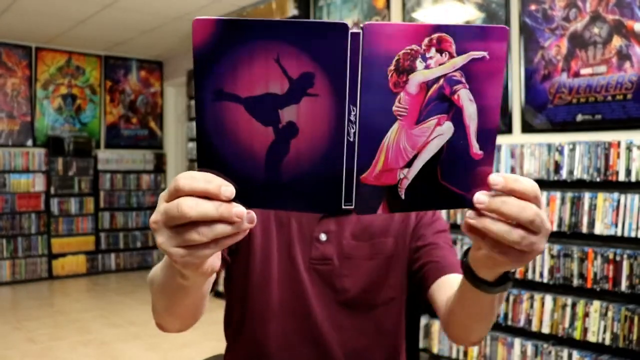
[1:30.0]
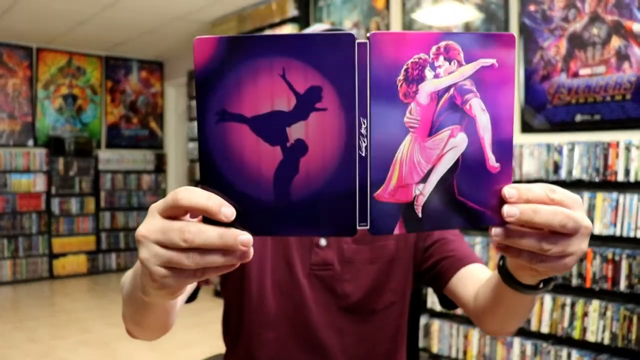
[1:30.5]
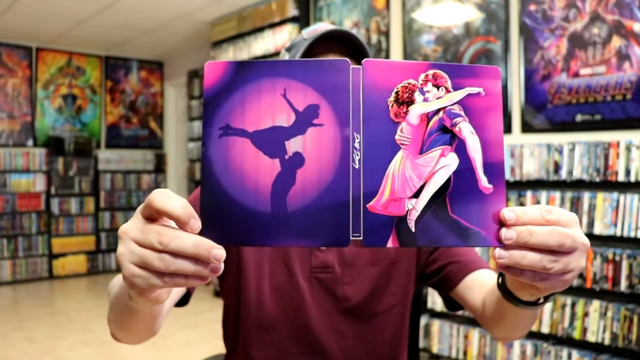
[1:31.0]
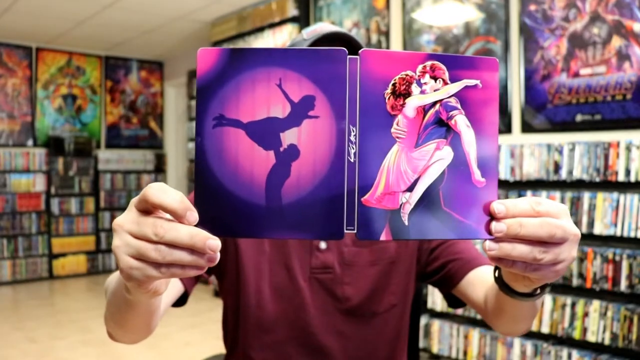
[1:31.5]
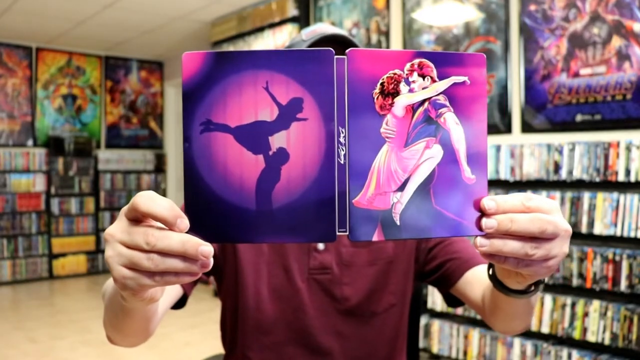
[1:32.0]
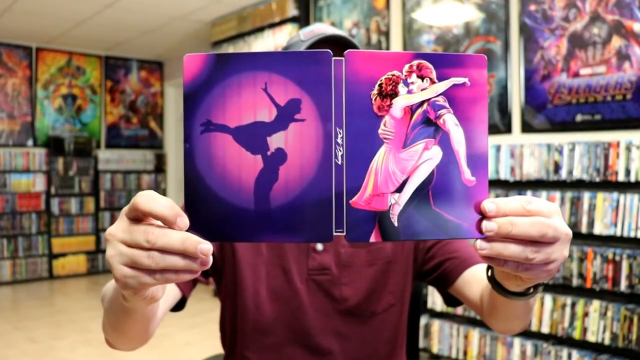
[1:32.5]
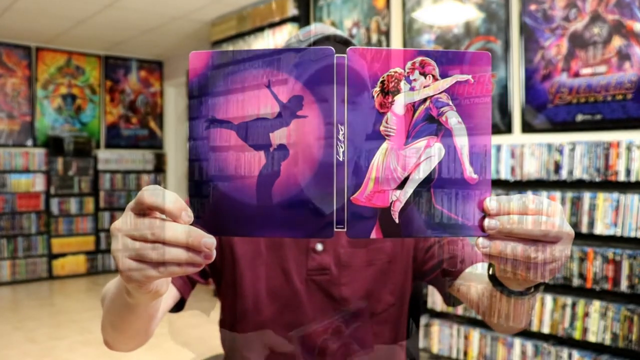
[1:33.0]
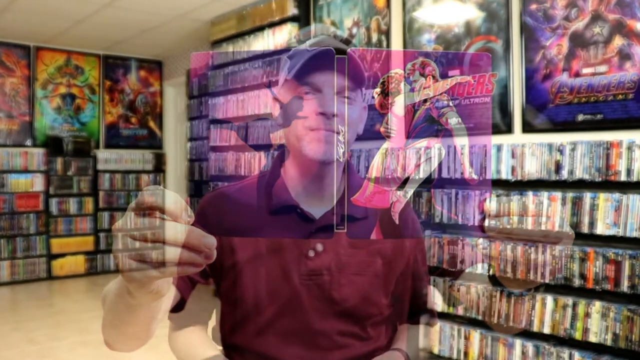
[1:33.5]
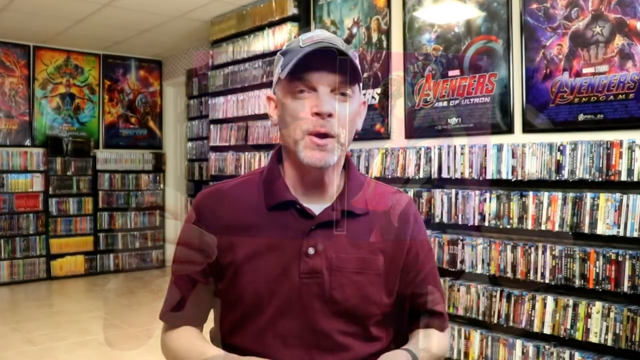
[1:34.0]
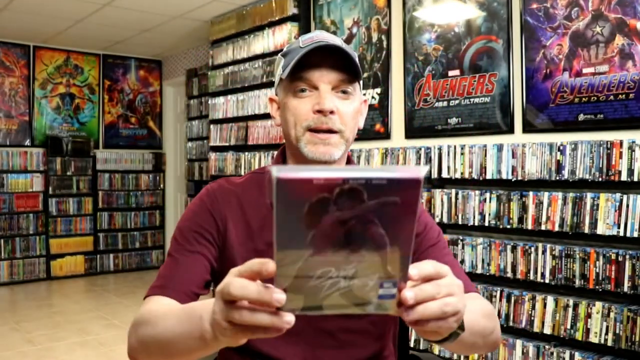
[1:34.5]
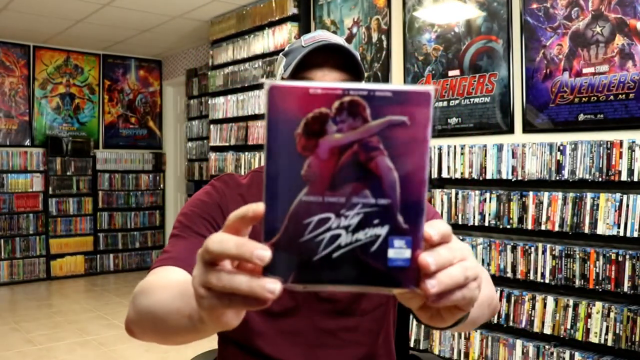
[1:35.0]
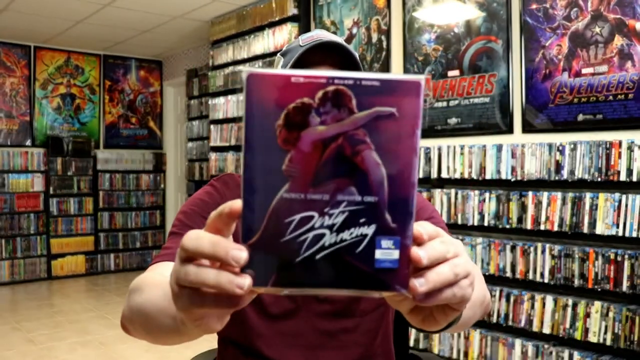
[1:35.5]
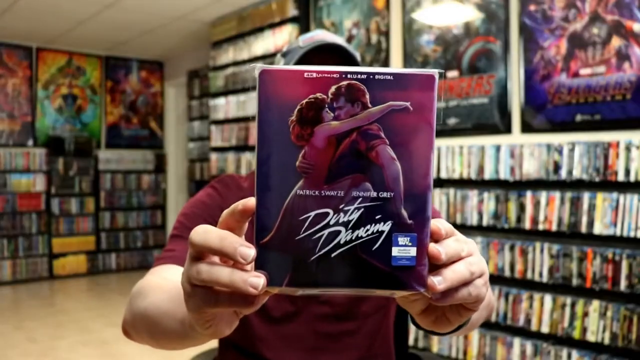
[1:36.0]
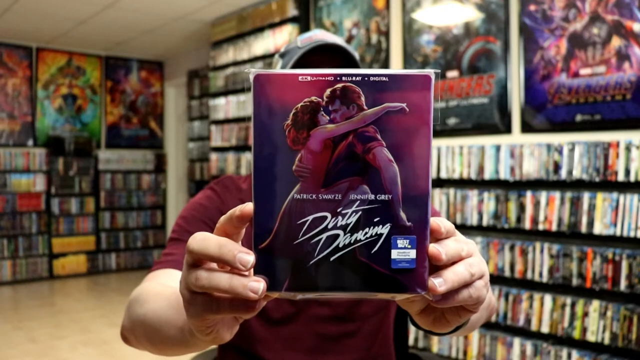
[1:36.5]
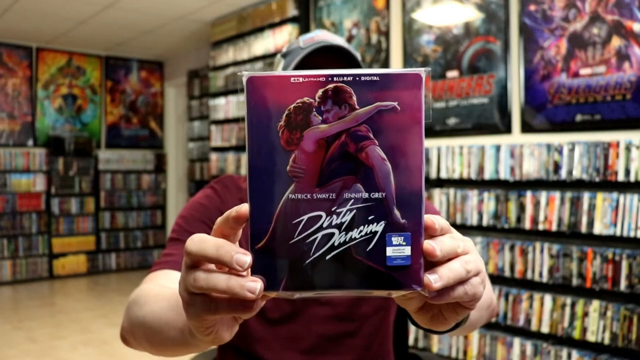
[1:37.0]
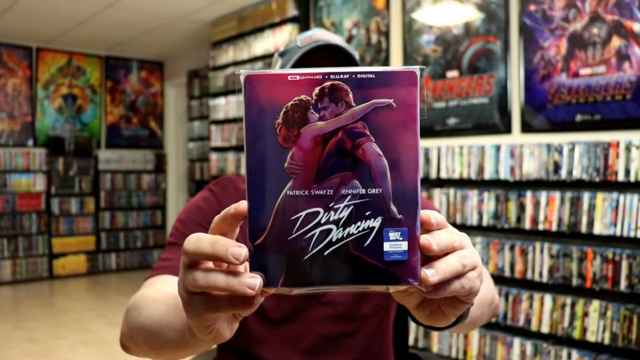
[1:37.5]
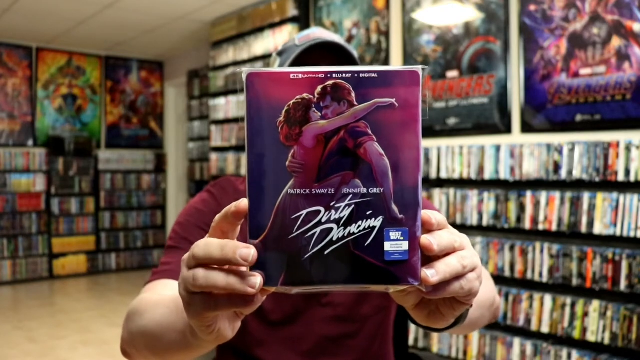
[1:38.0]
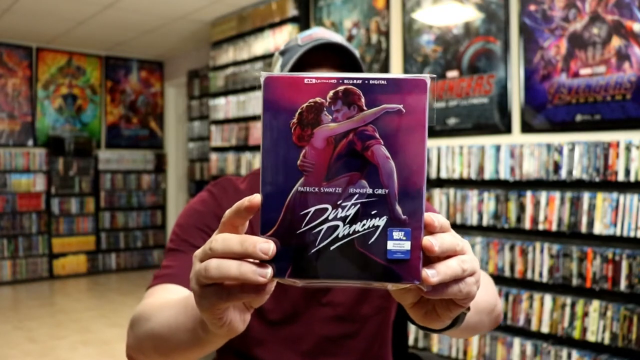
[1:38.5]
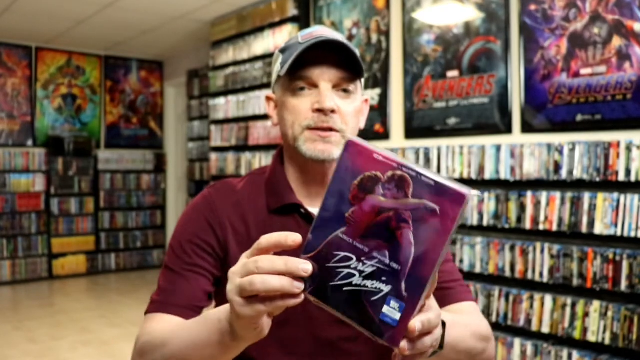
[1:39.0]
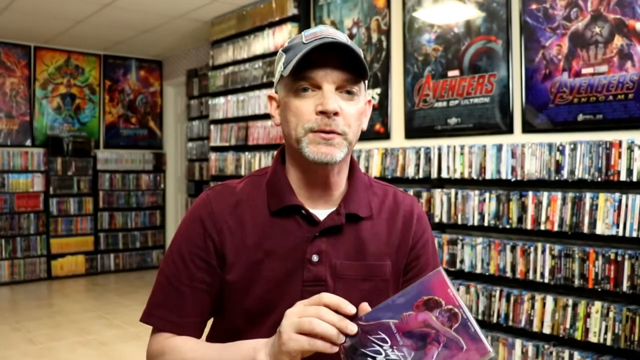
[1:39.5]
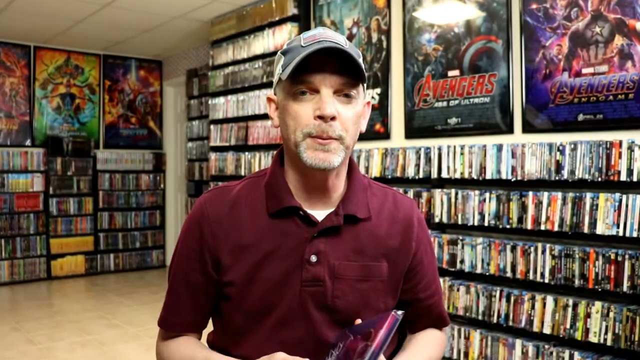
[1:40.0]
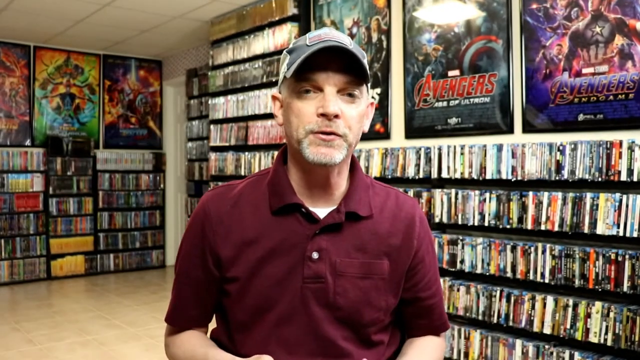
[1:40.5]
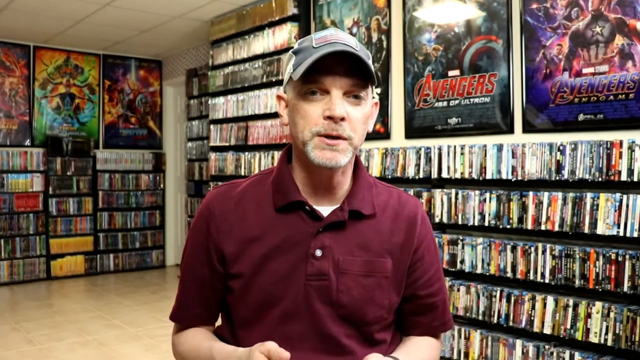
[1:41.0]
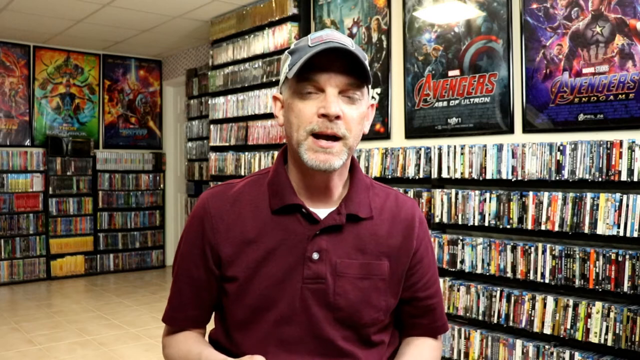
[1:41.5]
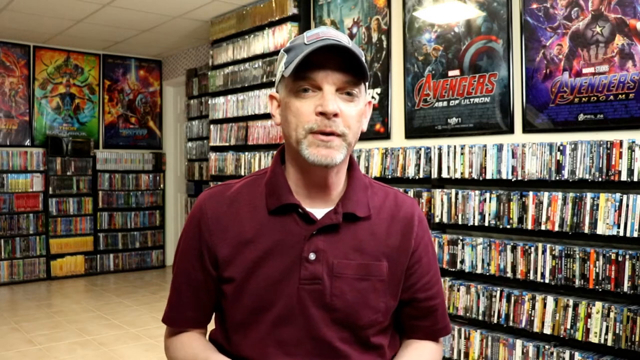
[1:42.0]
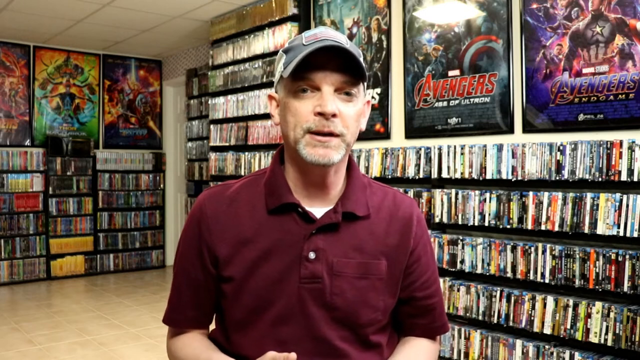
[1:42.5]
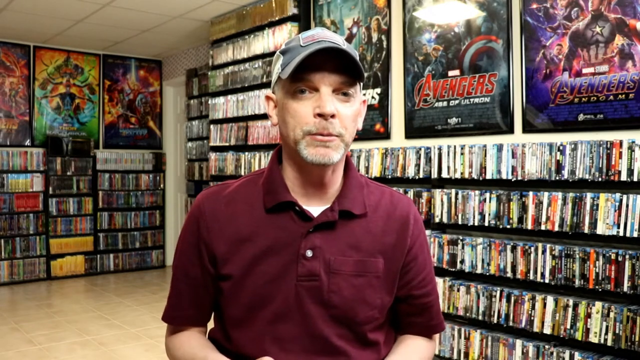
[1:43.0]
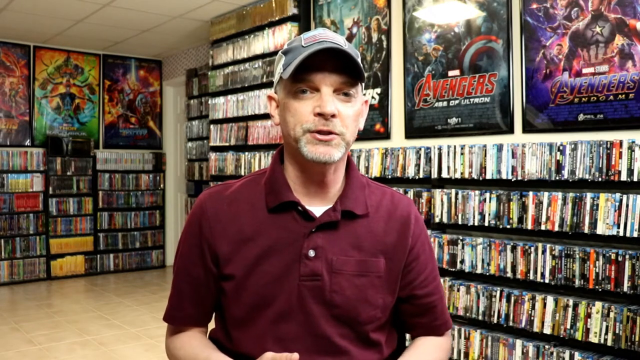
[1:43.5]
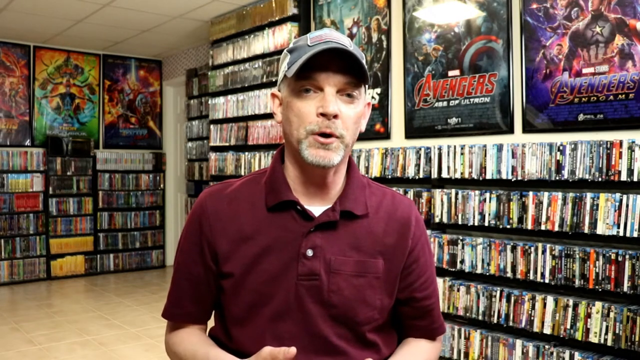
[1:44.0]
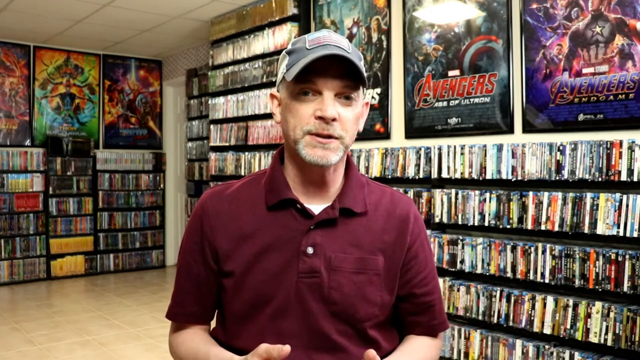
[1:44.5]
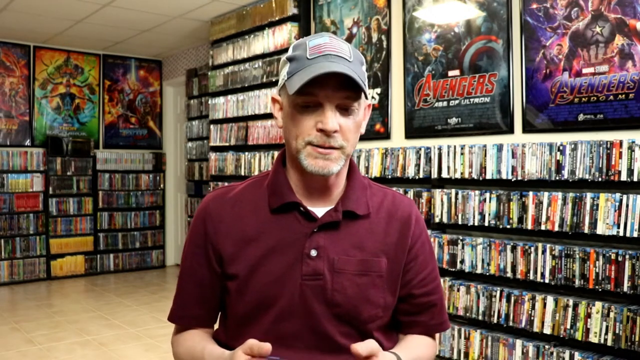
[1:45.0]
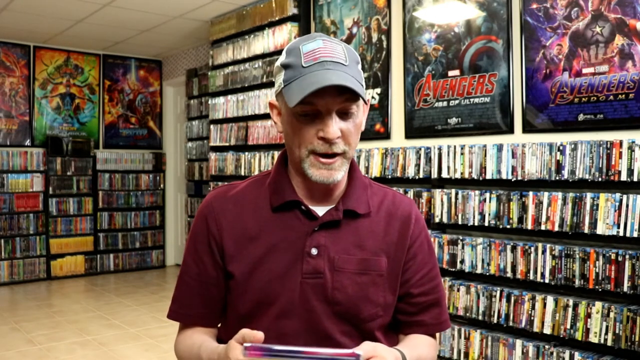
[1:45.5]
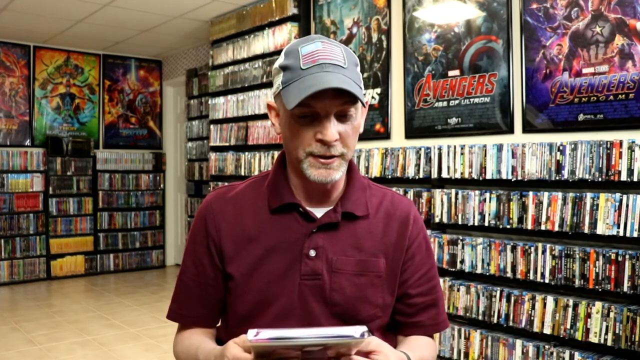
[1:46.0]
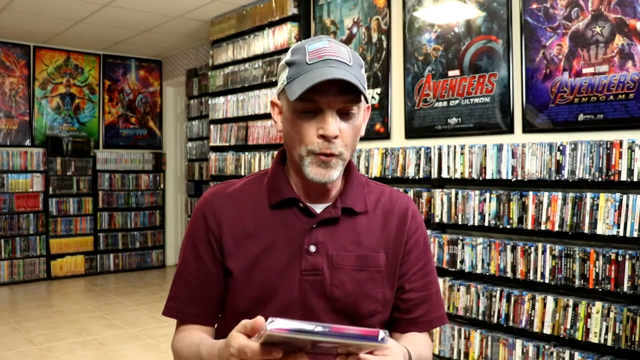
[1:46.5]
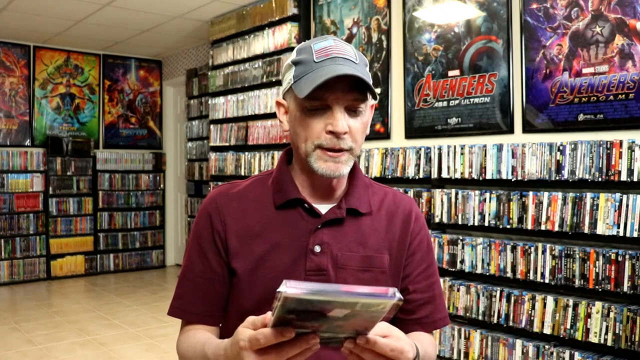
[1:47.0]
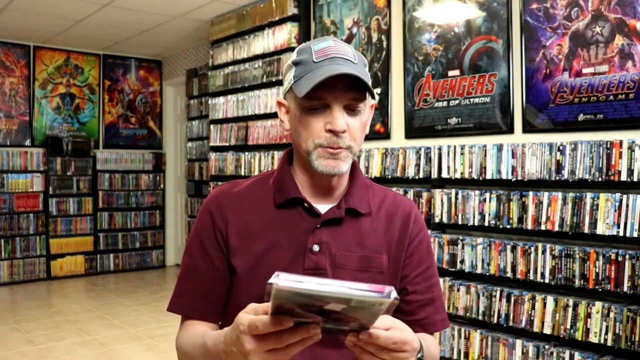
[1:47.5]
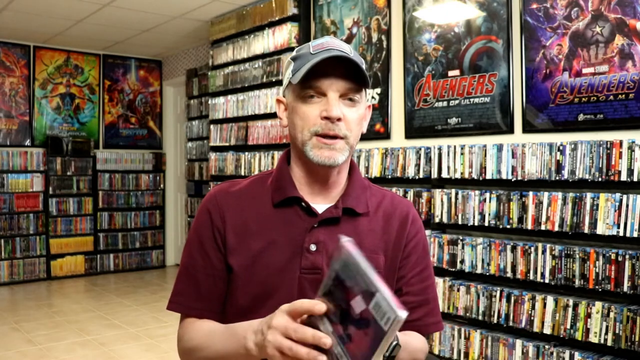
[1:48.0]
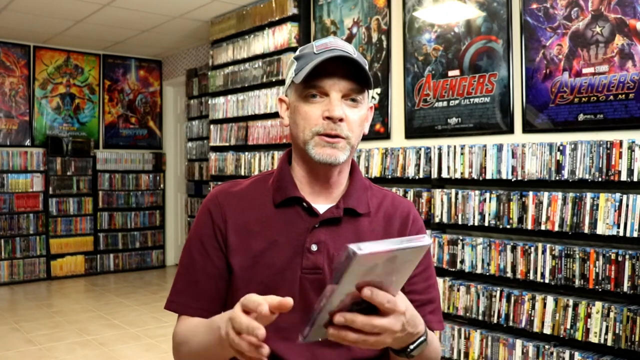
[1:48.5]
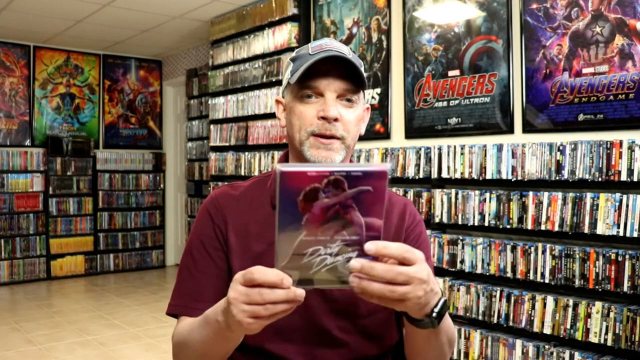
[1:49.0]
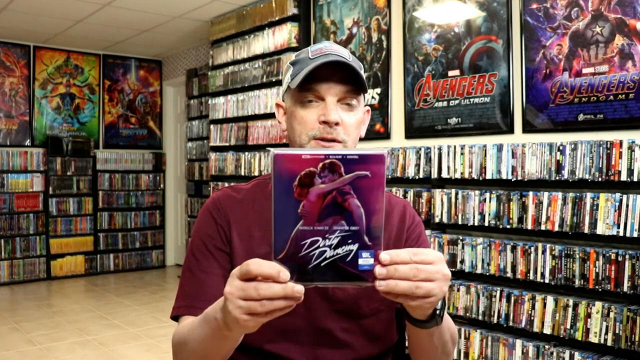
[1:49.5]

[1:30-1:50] The man holds the case with its front in the camera's view. A fade-out transition follows, after which he appears to be holding yet another, different version of Dirty Dancing, suggesting he is going through multiple versions and special editions of the film. This looks like the copy he had at the beginning of the video, unopened in its shrink wrap. He shows its front cover, where the characters look cartoonish or animated, not overly exaggerated but in a realistic digital art style. The video then cuts.